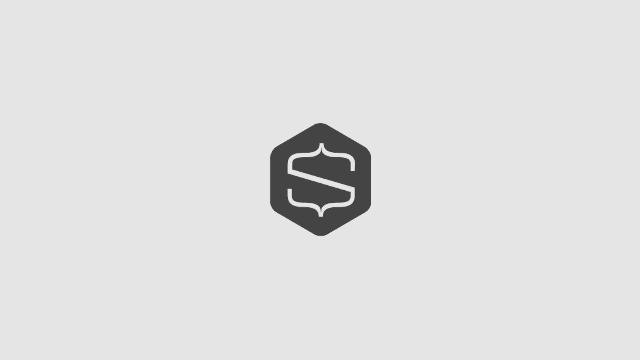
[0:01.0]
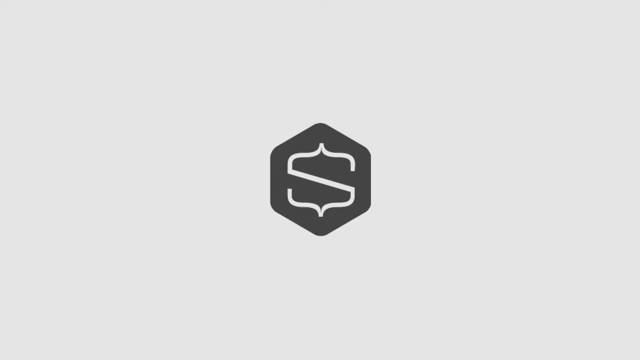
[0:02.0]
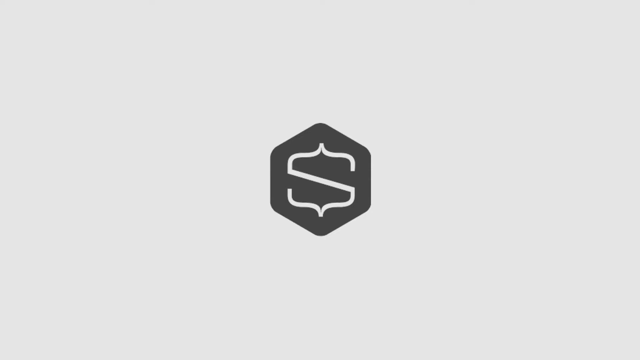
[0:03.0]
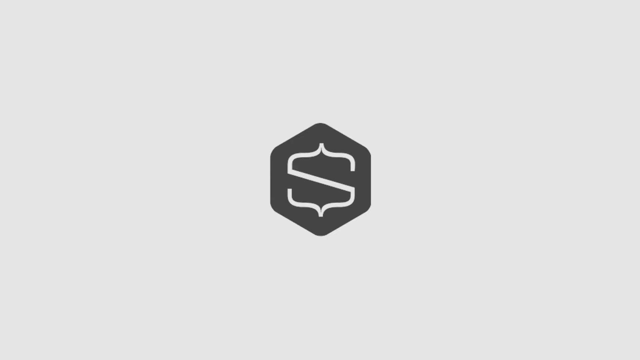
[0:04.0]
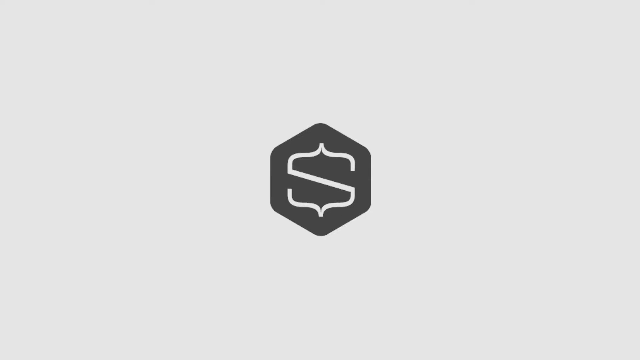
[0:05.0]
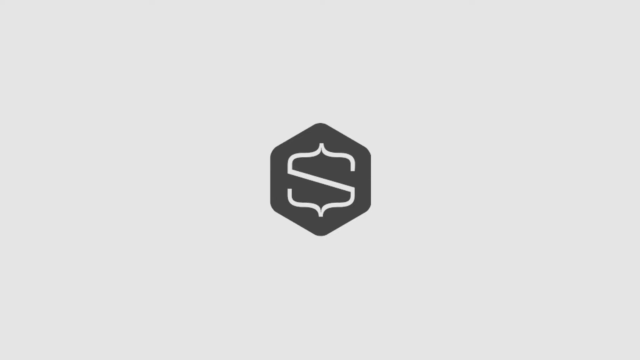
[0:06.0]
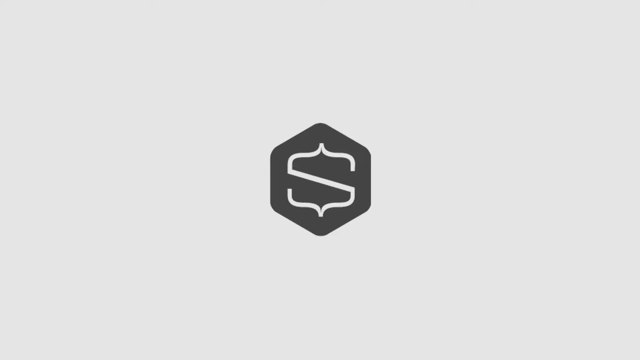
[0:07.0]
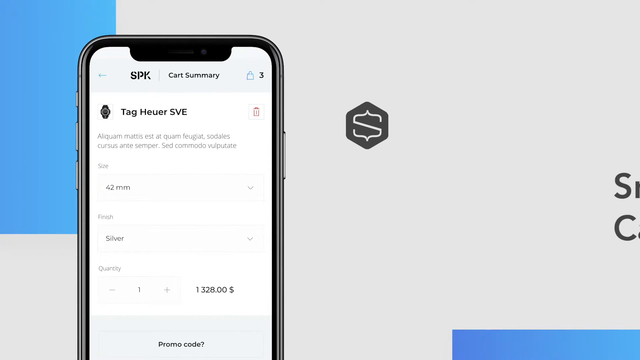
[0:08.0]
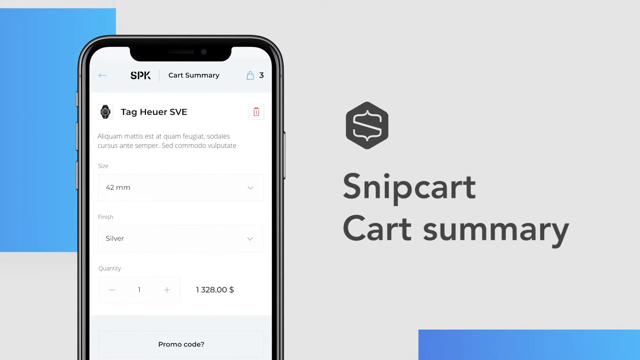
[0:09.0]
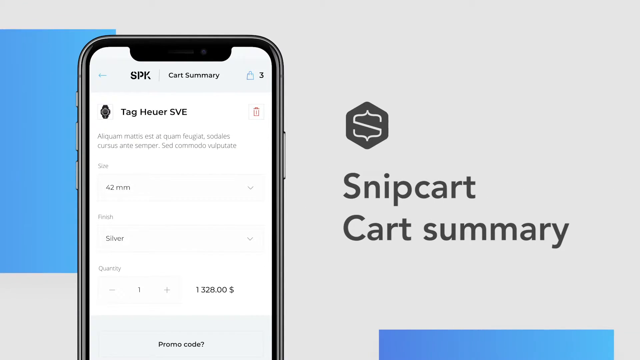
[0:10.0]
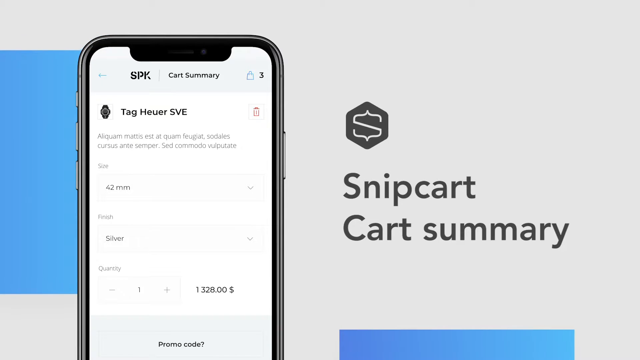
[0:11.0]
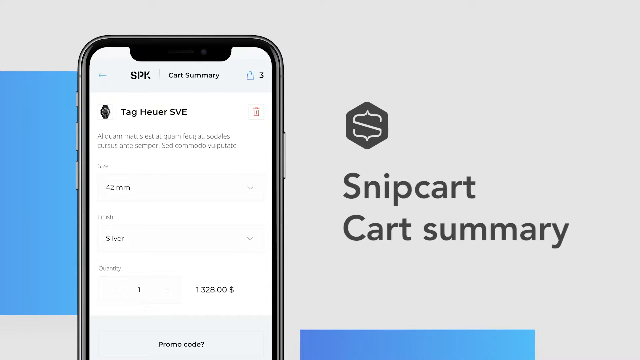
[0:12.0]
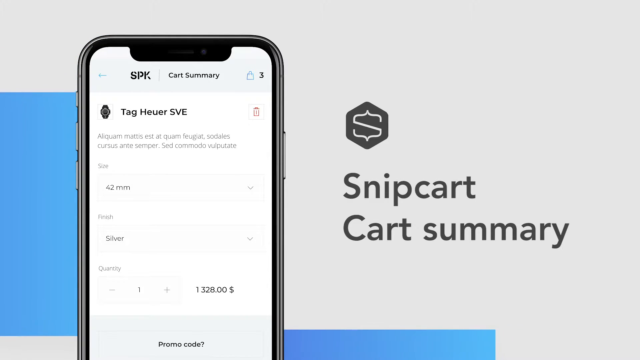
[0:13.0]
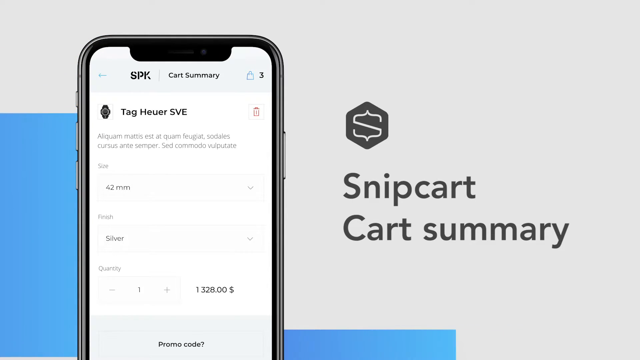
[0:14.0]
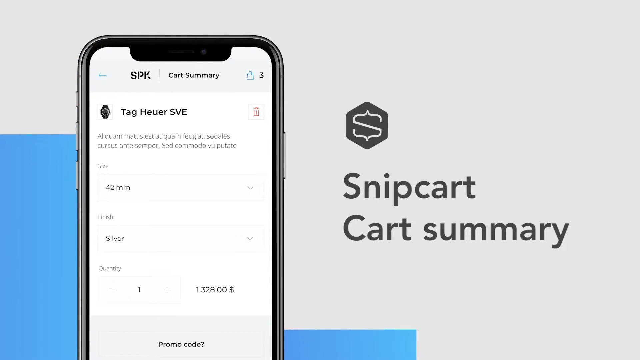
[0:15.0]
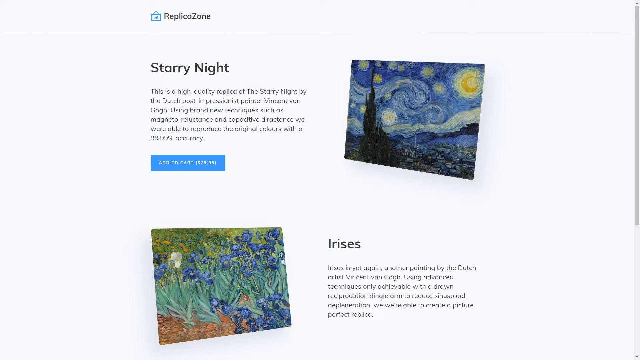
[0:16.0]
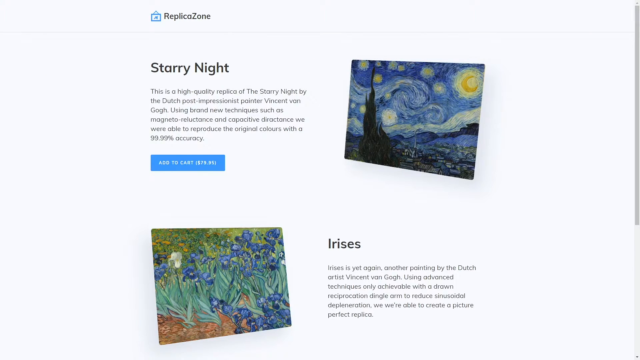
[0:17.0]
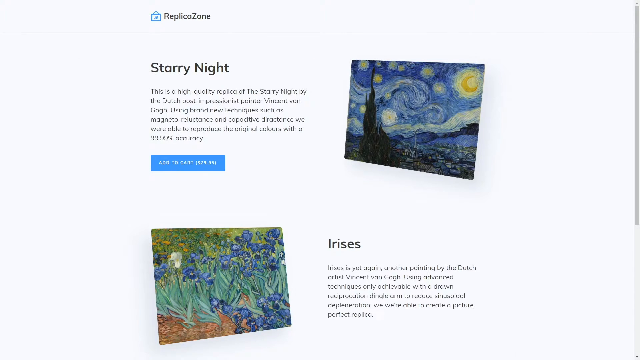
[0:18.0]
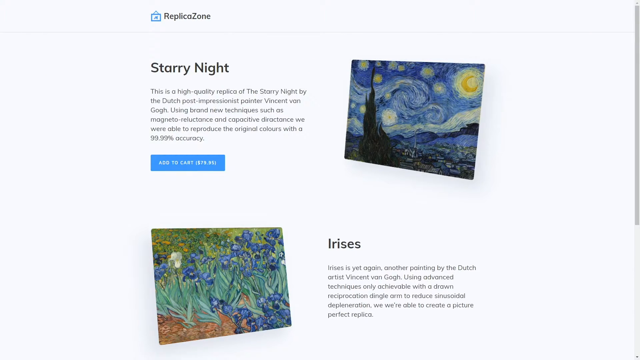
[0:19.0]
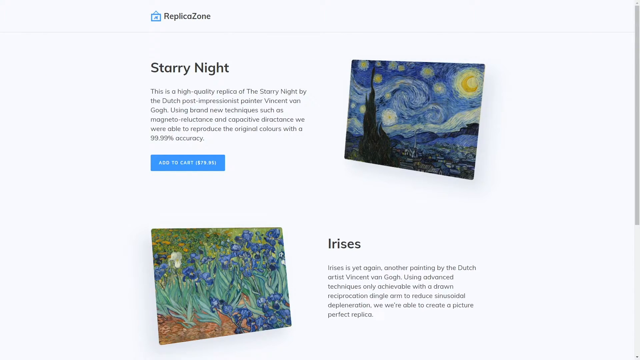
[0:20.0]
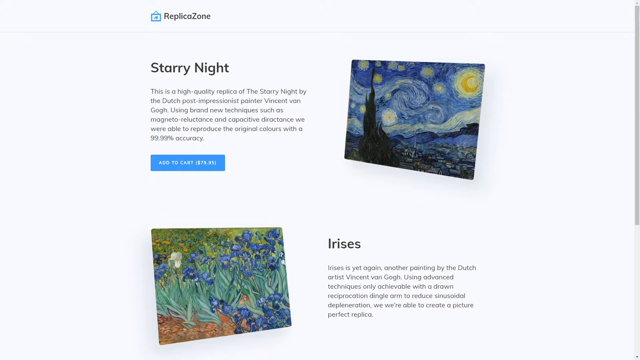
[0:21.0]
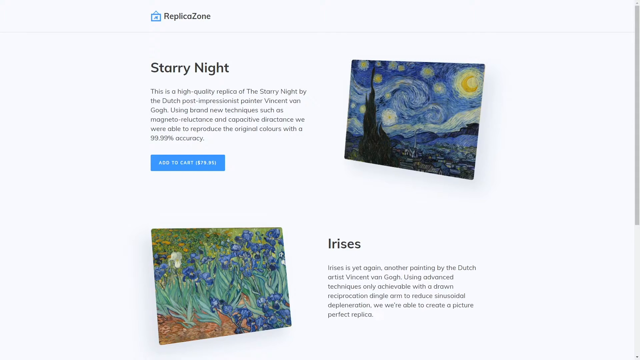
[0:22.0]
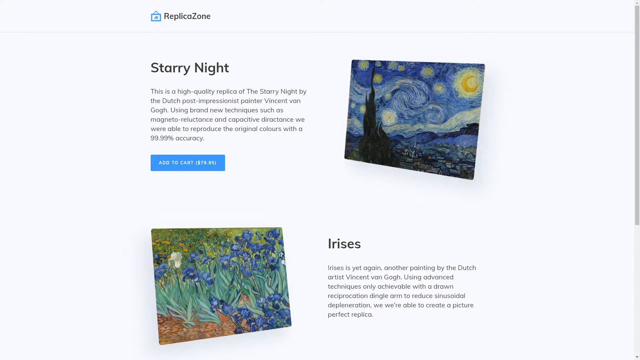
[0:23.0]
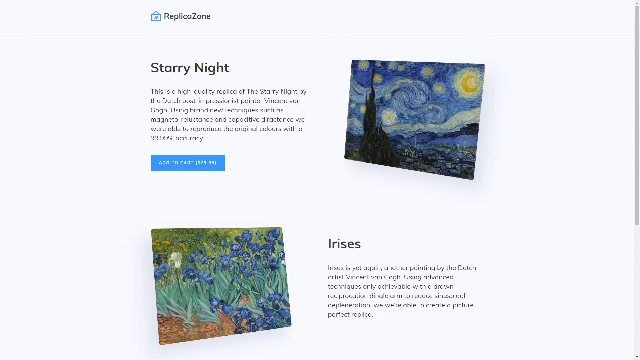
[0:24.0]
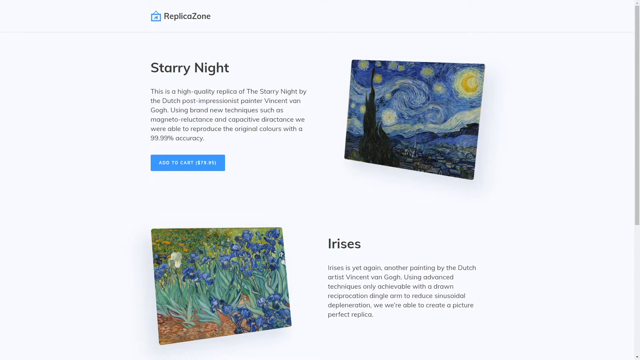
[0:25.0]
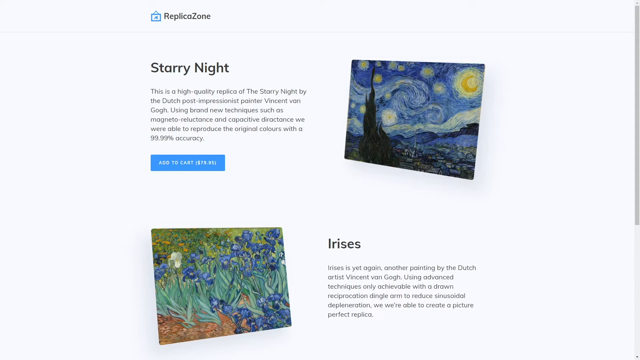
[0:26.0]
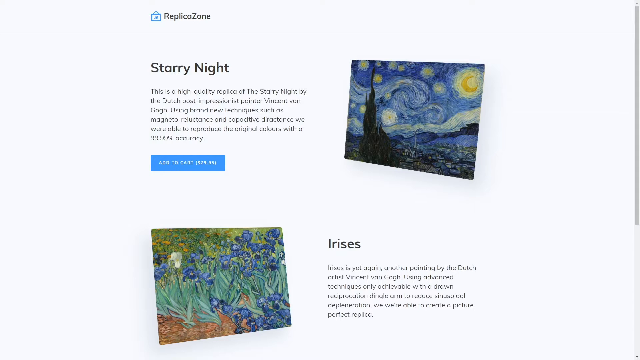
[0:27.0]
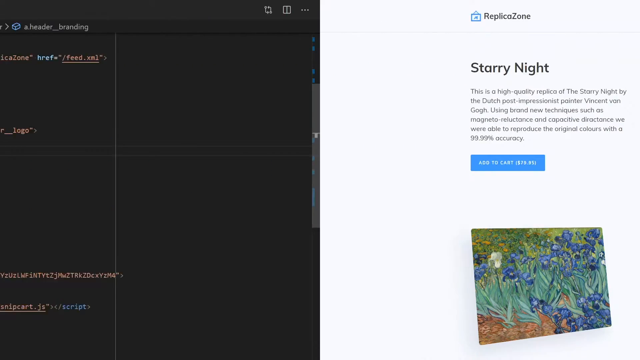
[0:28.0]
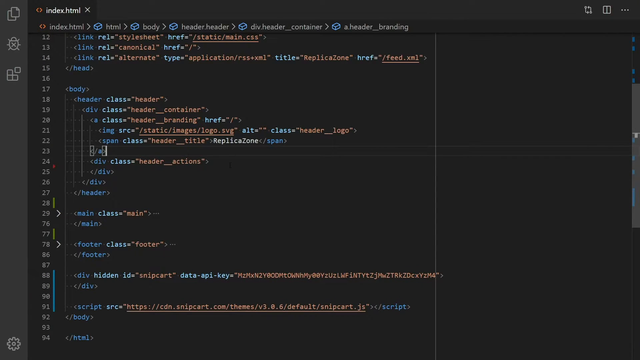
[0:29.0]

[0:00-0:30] The opening image shows a six-sided shape with a logo in the middle that looks like an F: two brackets on their side with a diagonal bar in the center. In the background of this first image, light blue rectangle shapes move on the left from top to bottom and along the bottom from right to left, moving toward each other. An image of a cell phone comes up from the bottom, moves to the top and stops there. Words come up from the right: "Snipcart cart summary" in gray type on a lighter gray background. The video then moves immediately to a page with a white background showing images of two paintings by Vincent Van Gogh, Starry Night at the top and Irises below it, each set at an angle on opposite sides and each with a description underneath. At the upper left it says "ReplicaZone". Immediately after that comes a black page for inputting code.